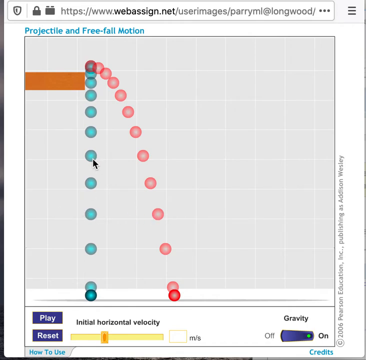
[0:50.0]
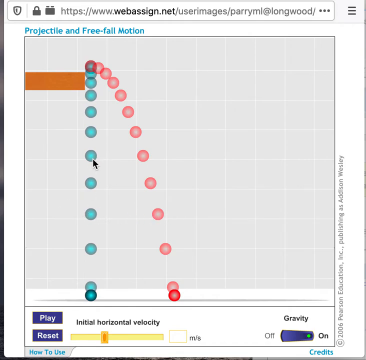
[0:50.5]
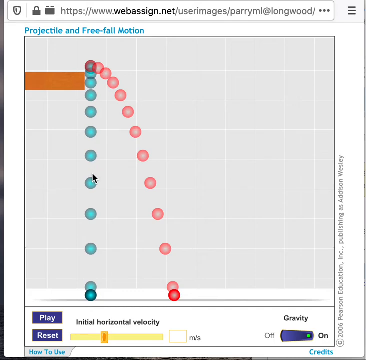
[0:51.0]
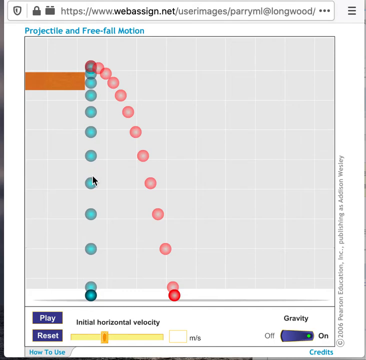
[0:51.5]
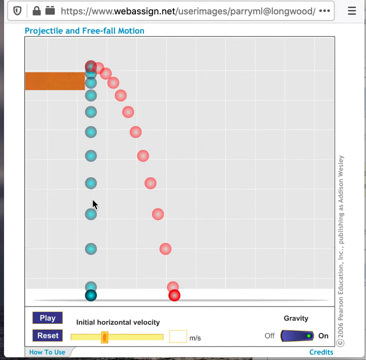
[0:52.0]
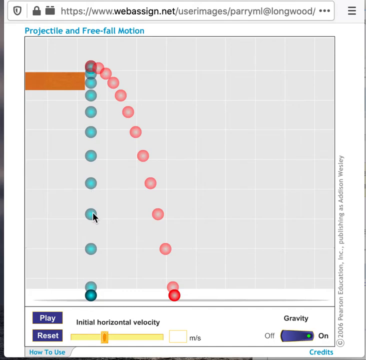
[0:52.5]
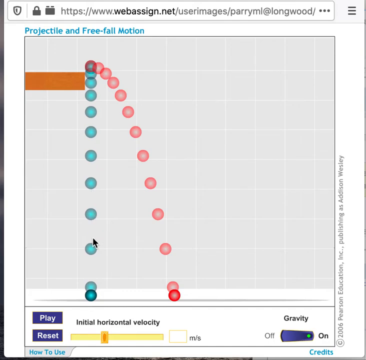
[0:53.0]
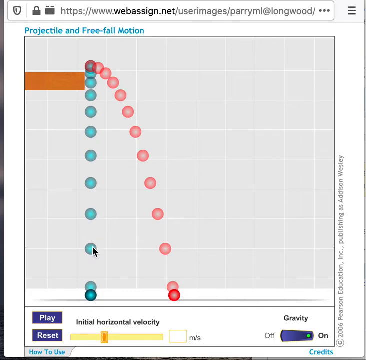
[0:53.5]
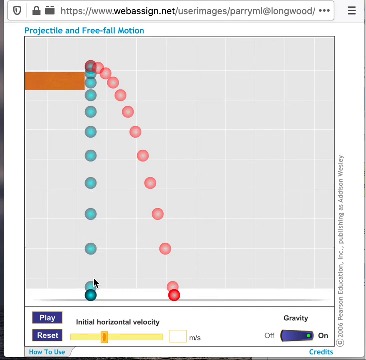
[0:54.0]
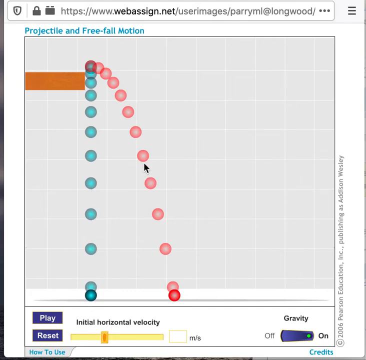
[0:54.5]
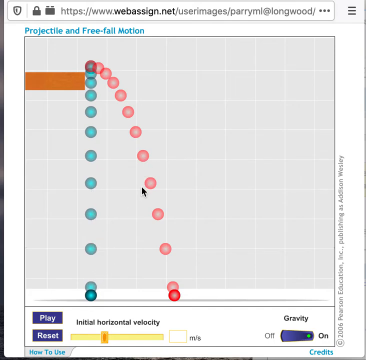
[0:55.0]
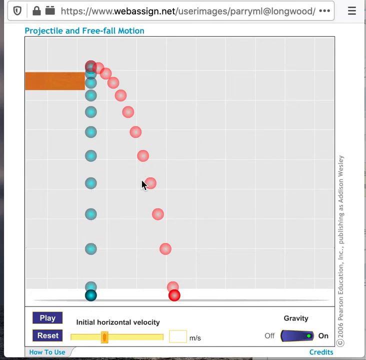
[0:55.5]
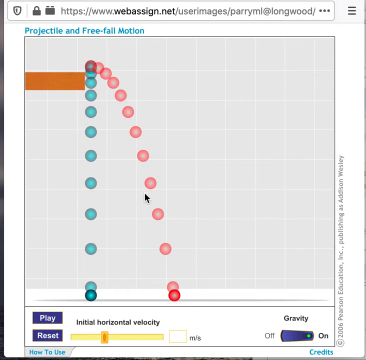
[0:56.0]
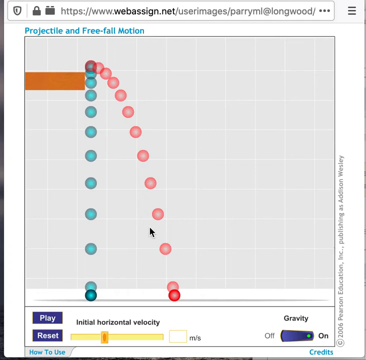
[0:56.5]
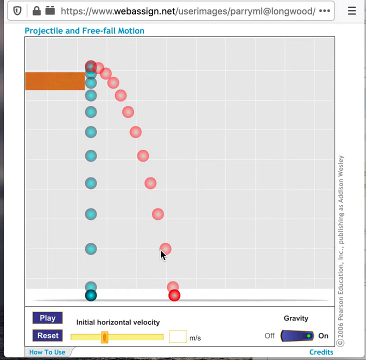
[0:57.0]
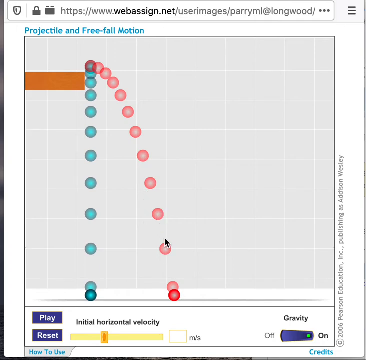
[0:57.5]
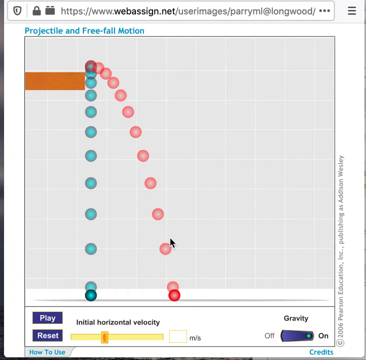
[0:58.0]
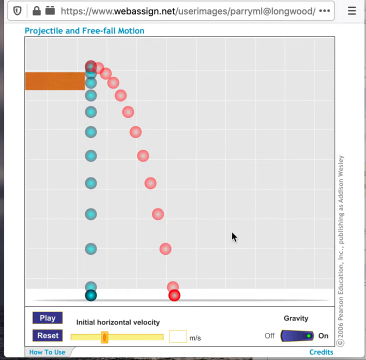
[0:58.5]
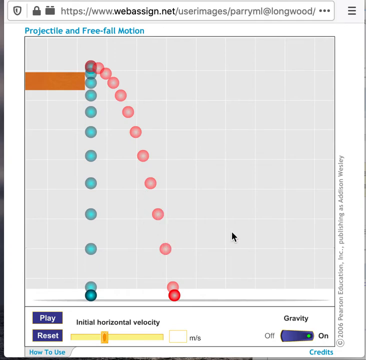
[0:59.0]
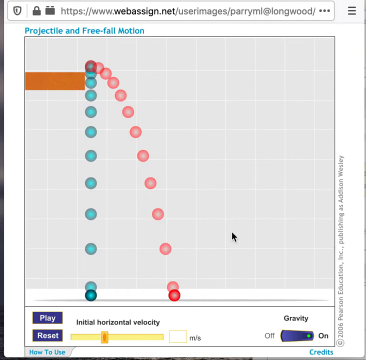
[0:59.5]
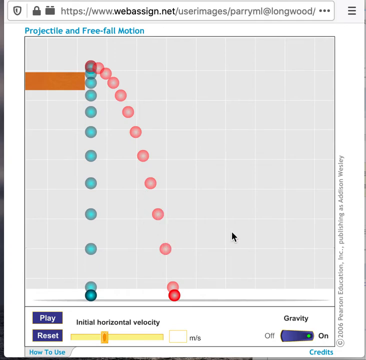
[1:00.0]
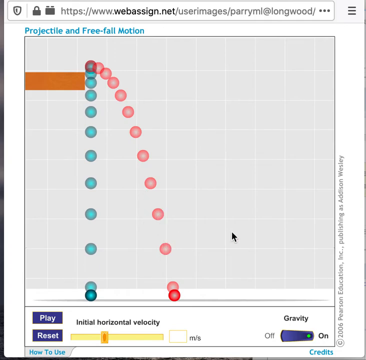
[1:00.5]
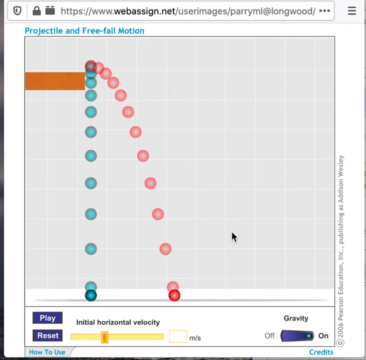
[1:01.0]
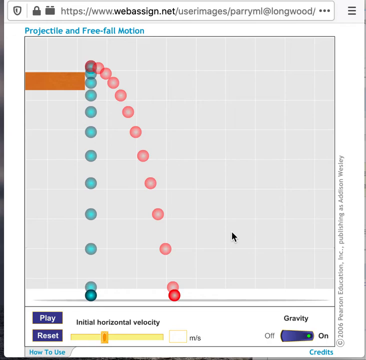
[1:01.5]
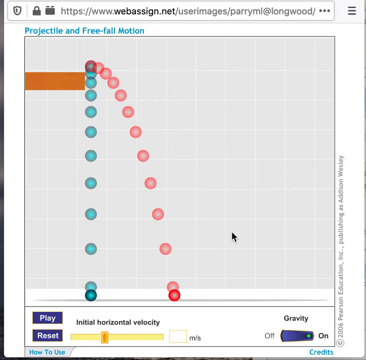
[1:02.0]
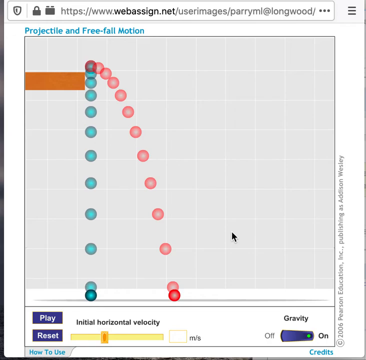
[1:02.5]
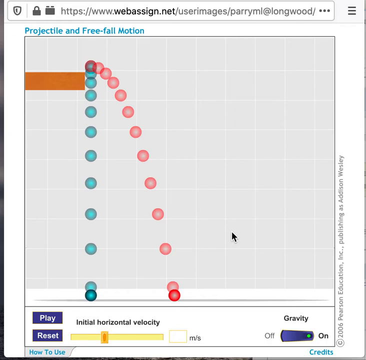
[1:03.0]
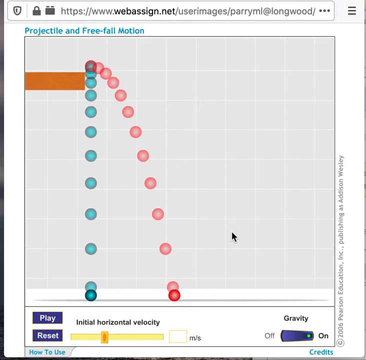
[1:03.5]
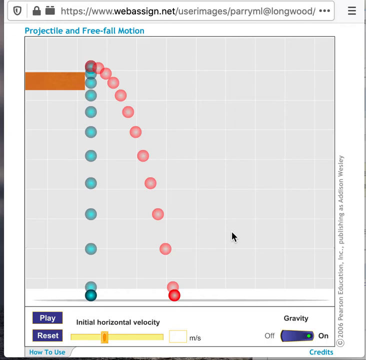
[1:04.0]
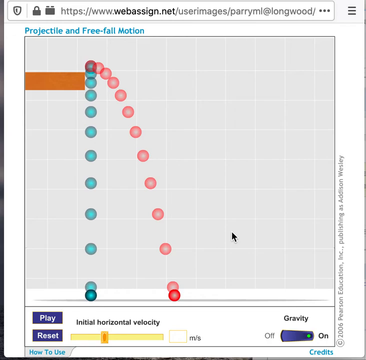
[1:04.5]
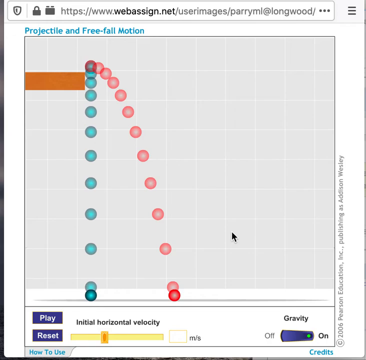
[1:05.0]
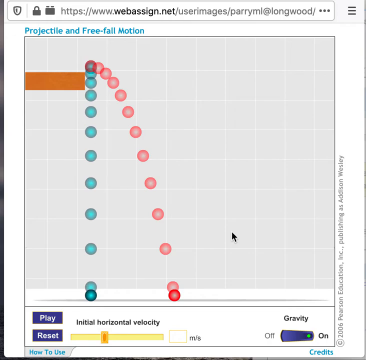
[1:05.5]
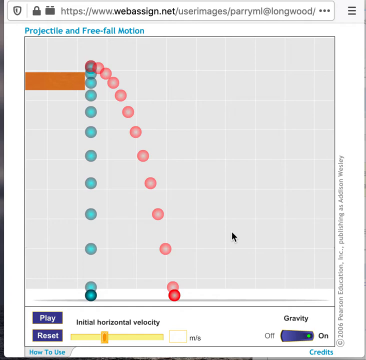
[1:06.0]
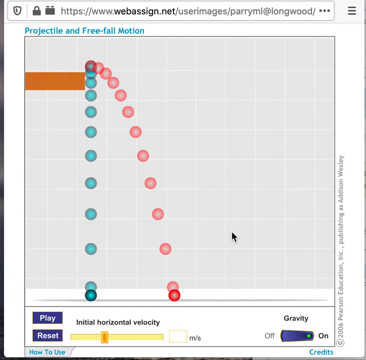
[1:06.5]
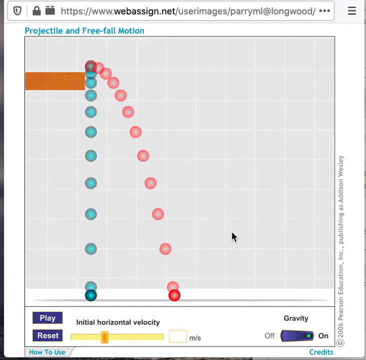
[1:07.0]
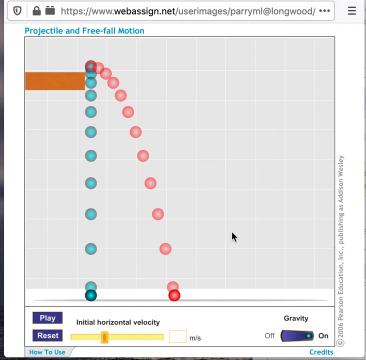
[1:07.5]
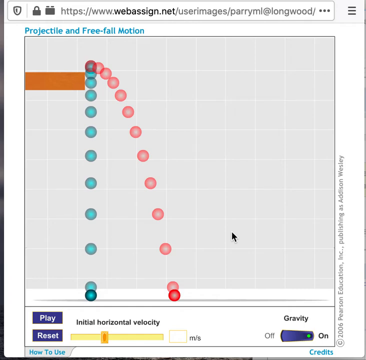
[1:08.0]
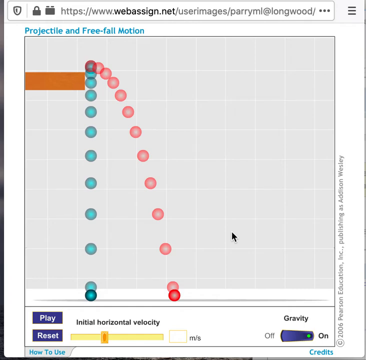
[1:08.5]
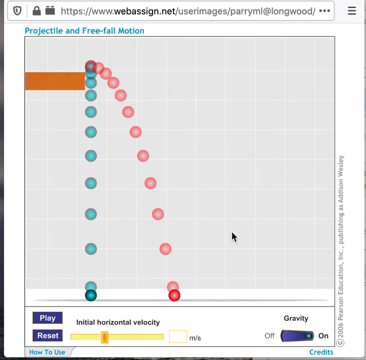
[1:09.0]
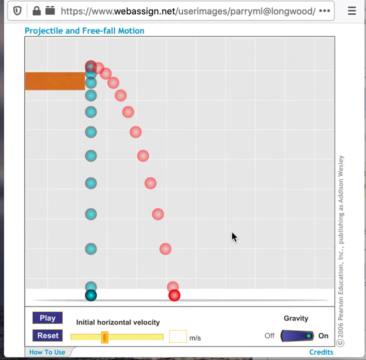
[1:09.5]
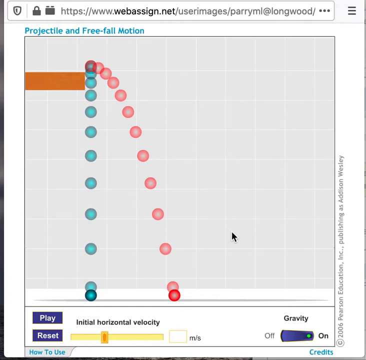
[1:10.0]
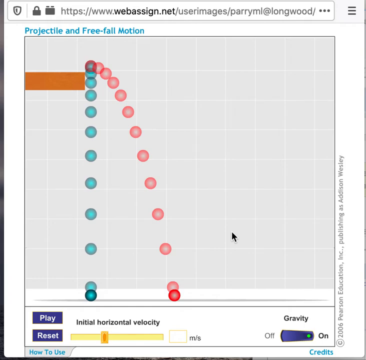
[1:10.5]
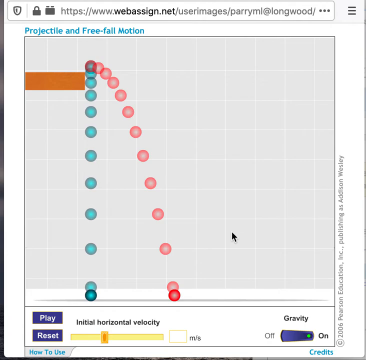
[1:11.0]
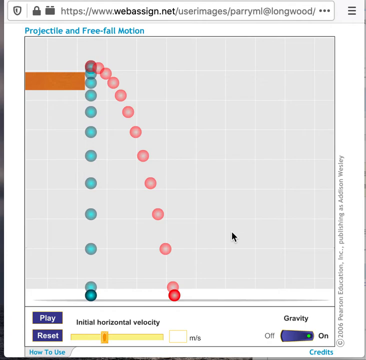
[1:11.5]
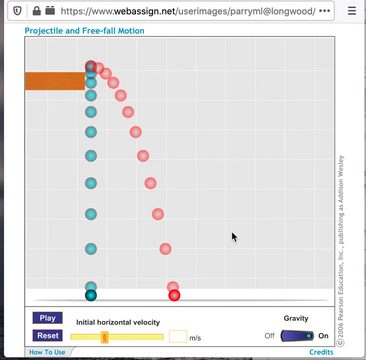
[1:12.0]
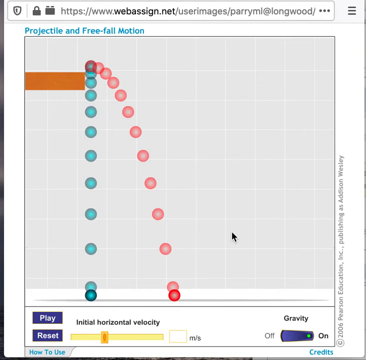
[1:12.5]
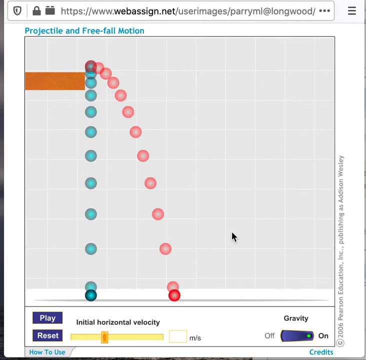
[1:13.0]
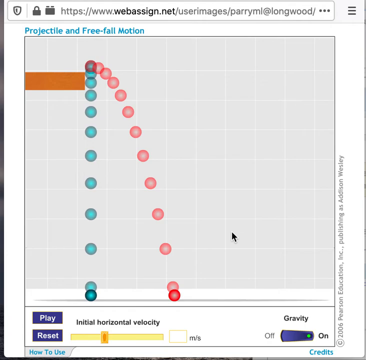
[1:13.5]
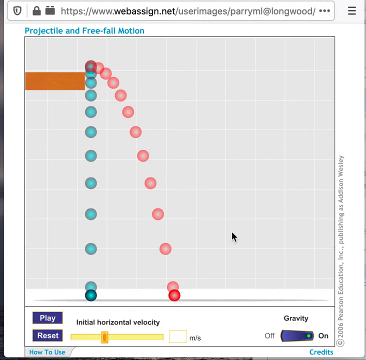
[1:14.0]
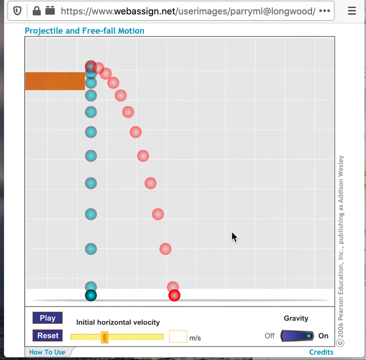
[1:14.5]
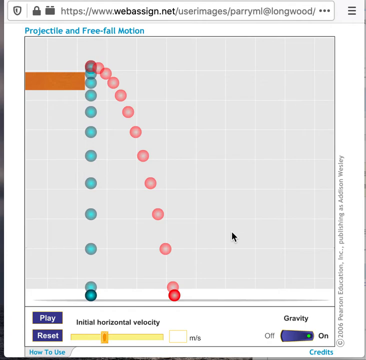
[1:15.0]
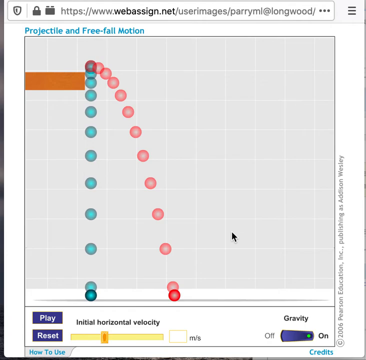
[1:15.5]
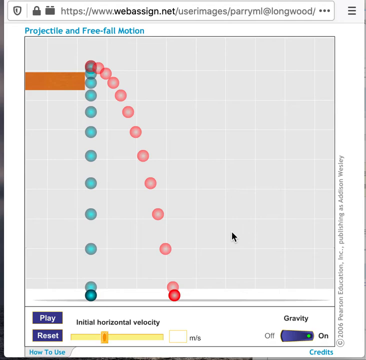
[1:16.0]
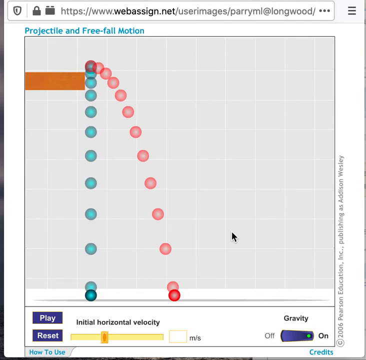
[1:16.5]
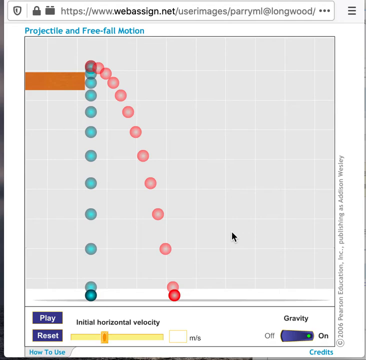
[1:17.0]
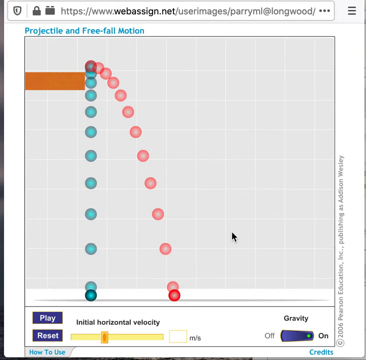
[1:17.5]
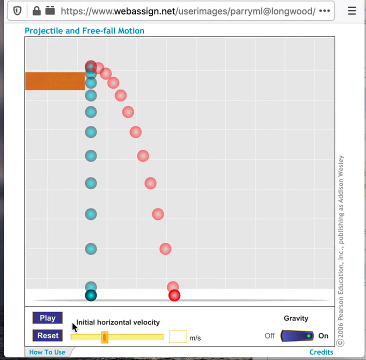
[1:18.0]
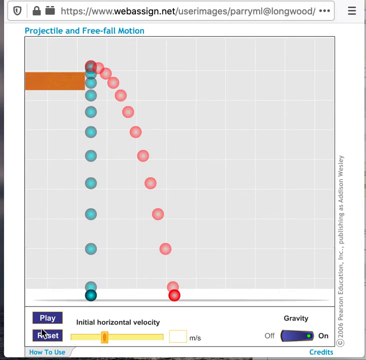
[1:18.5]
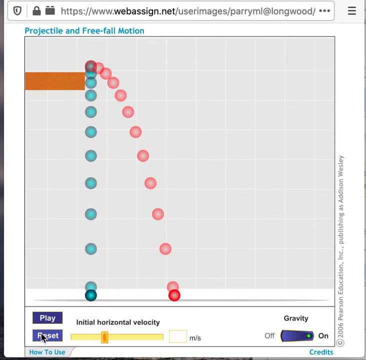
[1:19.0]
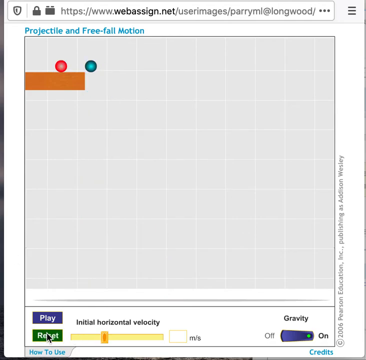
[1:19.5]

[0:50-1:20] A white search bar at the top of the screen reads "www.webassign.net\user images". Below it is a screen made up of light gray squares arranged horizontally and vertically. In the bottom left corner are two blue rectangles, one on top of the other, the top one with "play" written in white and the bottom one with "reset" written in white. To the right is a yellow line, and above it are the words "initial horizontal velocity". In the bottom right corner is a dark blue rectangle with "off" on its left side and "on" on its right side, and above it is the word "gravity" in black. In the top left corner of the screen, written in baby blue, is "projectile in free fall motion". Right beneath that, on the gridded screen, is a small brown rectangle, and a bunch of turquoise balls run from the rectangle down to the bottom of the screen. A red ball also comes down from the rectangle to the bottom of the screen, arching out a little. A black arrow points out what is happening on the screen, moving whenever someone moves their mouse.